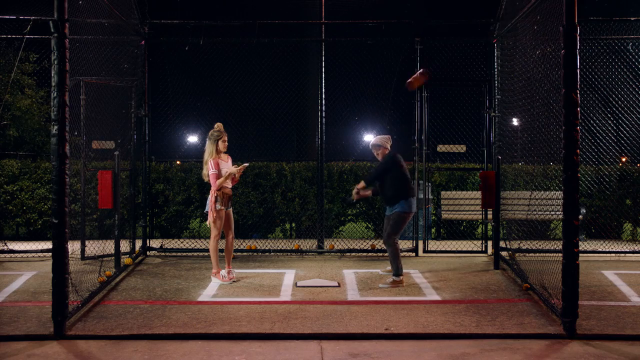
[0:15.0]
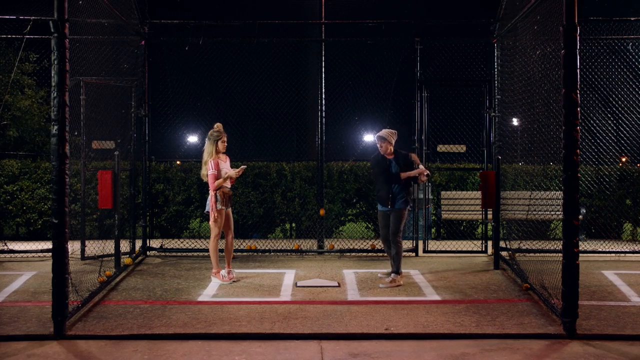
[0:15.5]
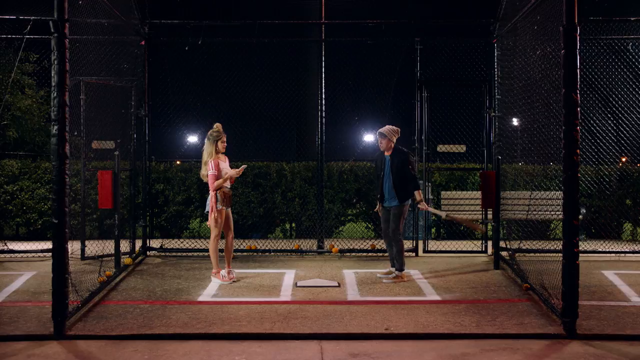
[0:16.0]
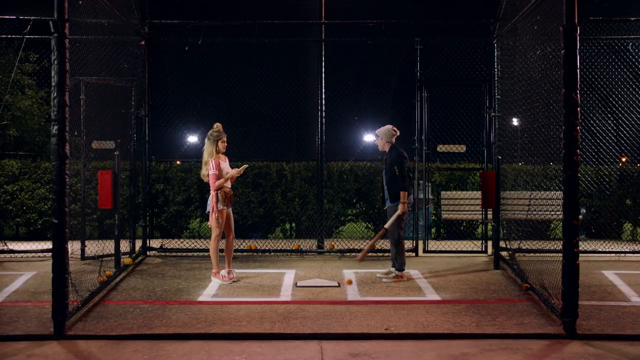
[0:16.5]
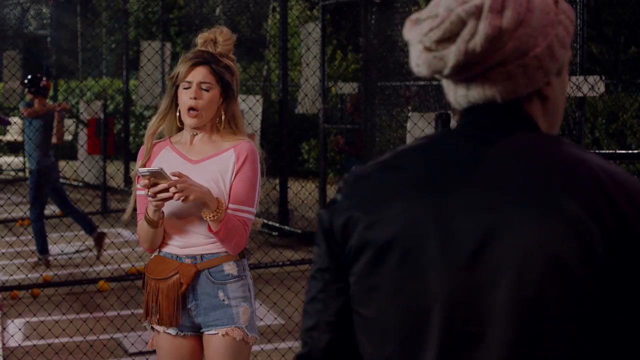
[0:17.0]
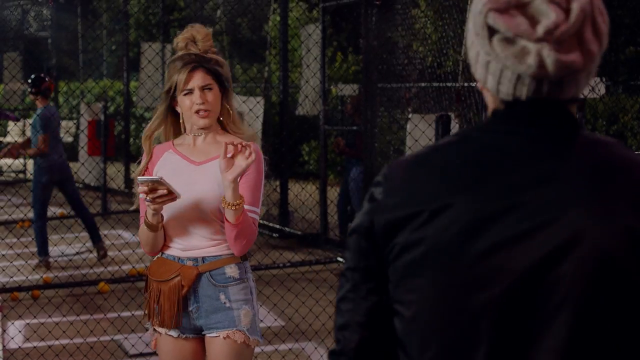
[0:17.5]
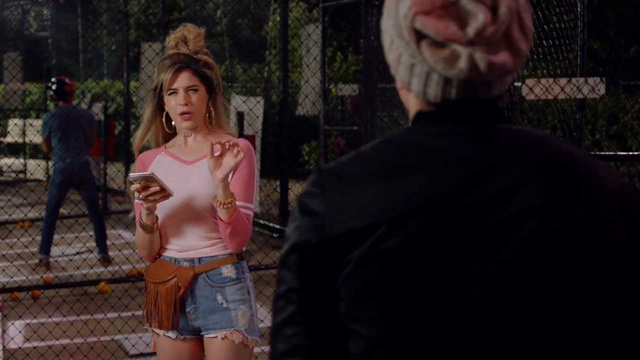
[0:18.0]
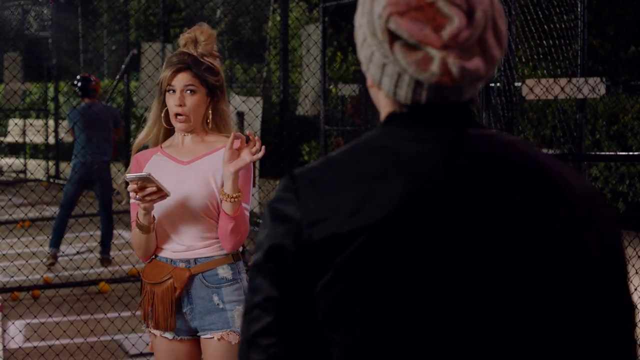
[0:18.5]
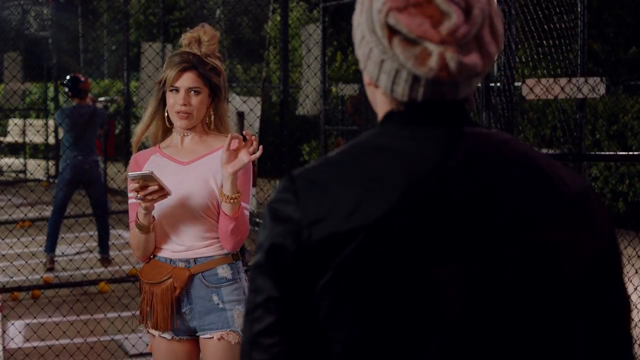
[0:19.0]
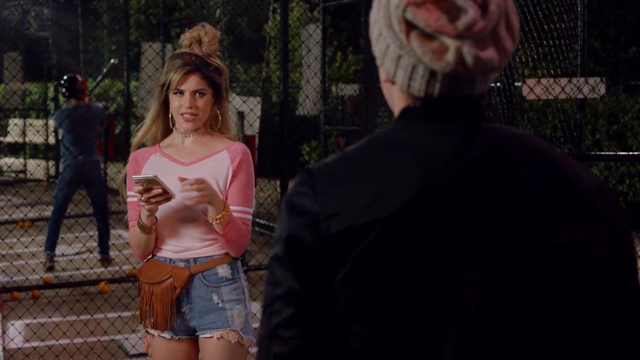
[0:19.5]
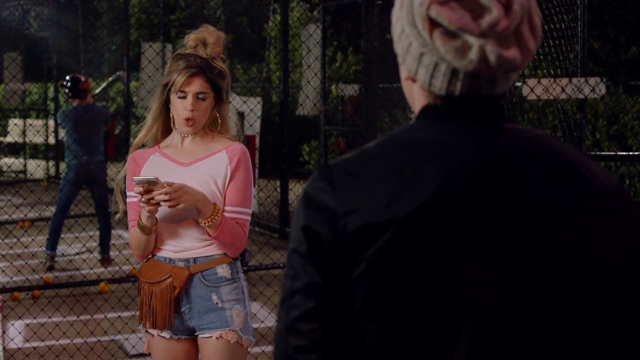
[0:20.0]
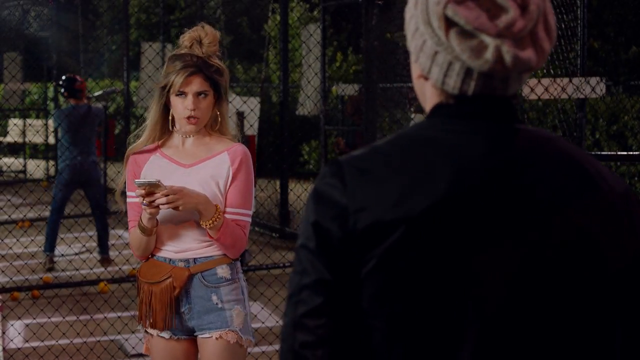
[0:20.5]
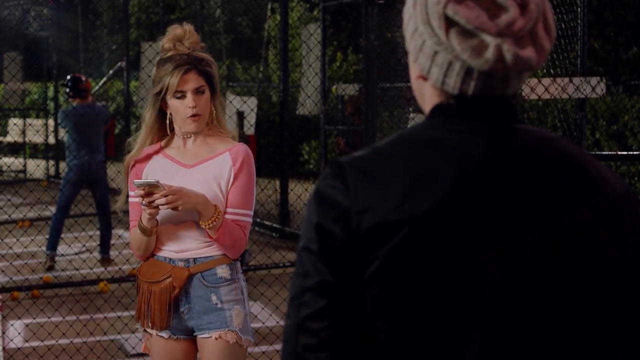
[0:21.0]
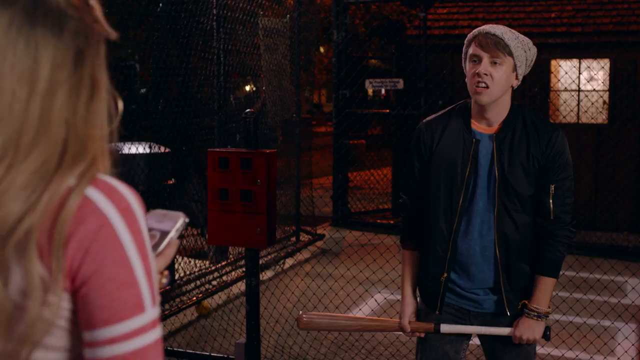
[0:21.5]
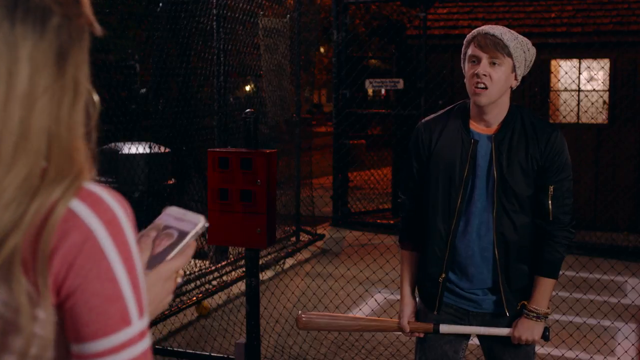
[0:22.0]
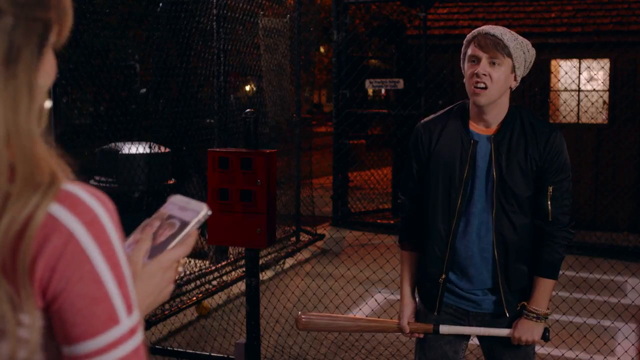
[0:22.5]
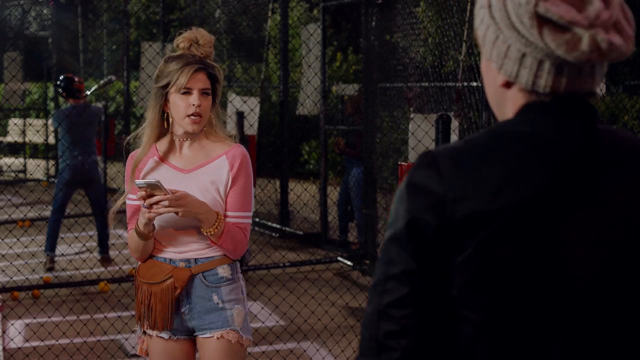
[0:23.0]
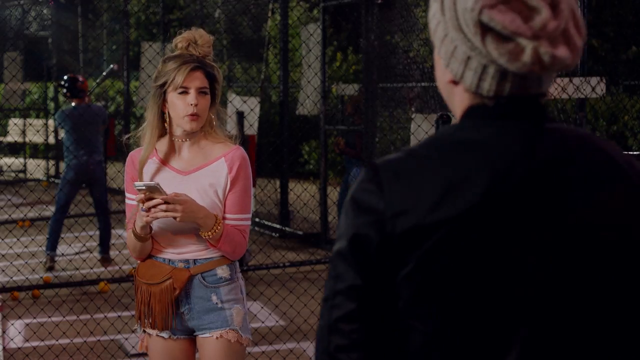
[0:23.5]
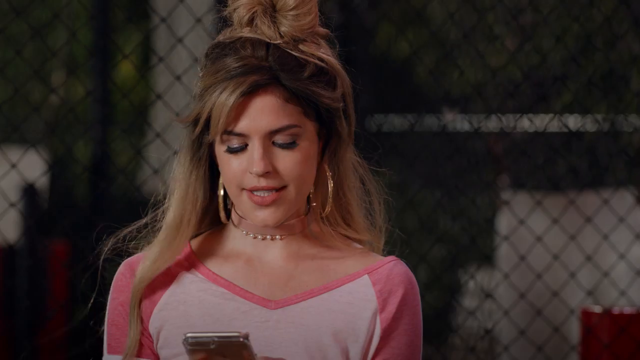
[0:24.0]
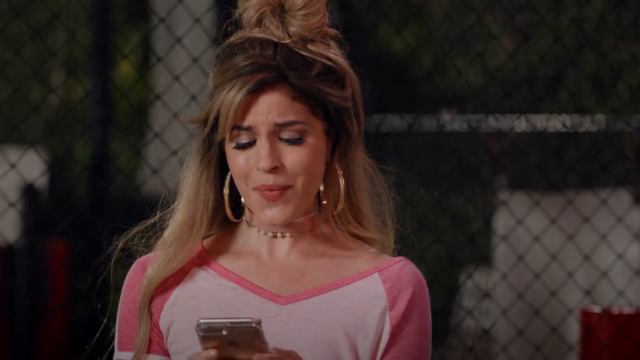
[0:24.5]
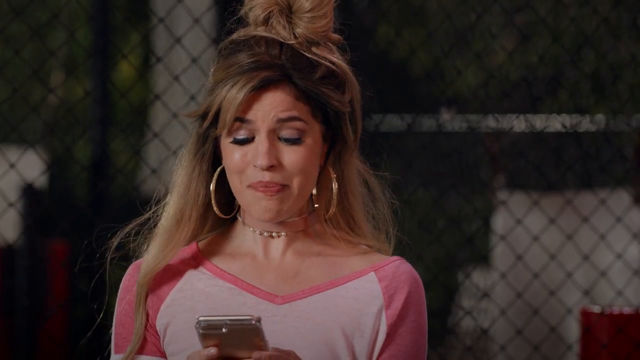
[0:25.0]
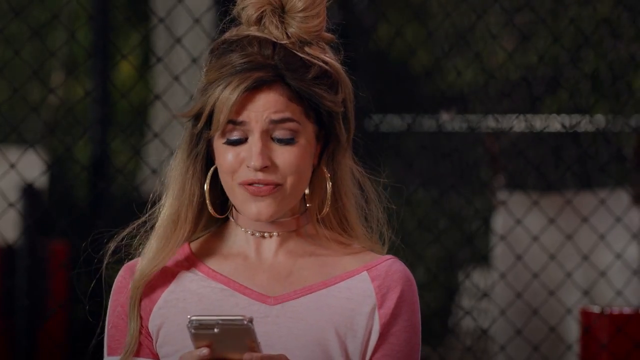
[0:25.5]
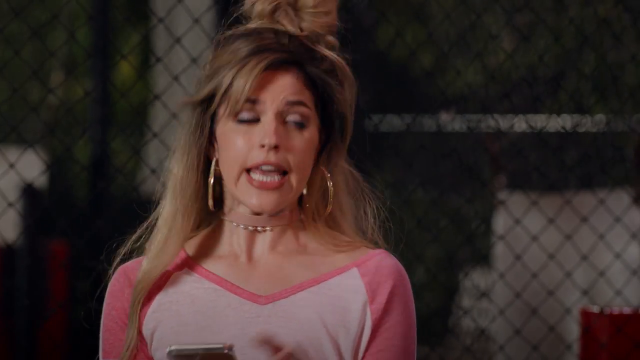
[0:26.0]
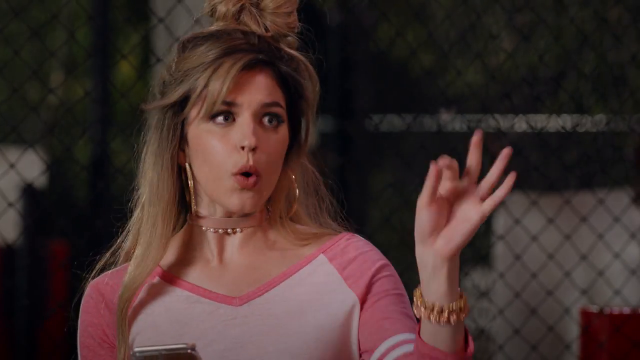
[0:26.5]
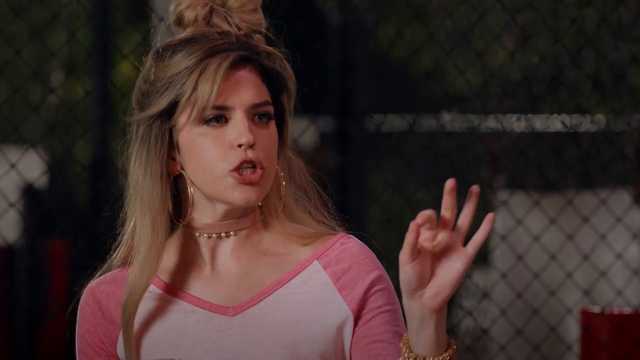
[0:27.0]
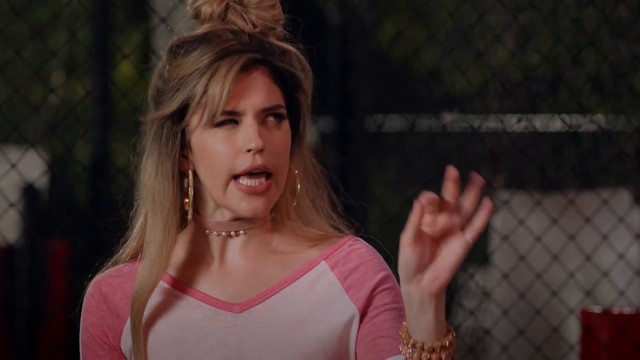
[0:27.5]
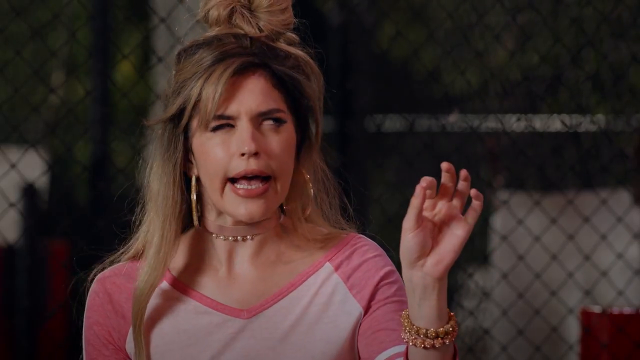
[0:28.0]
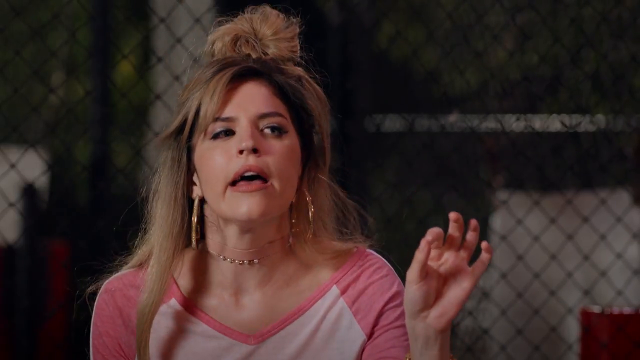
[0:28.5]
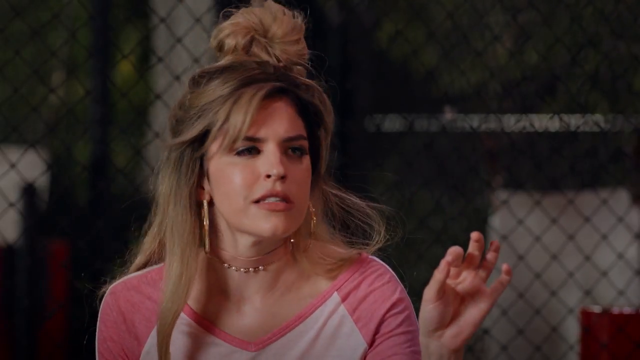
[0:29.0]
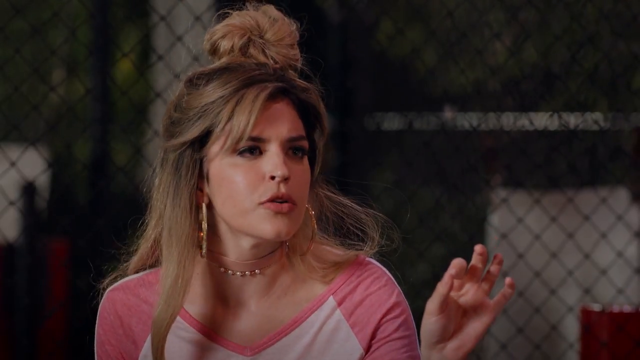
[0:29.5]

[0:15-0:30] Two people are seen at a sort of wide angle in a batting cage at night. The man in the batting cage wears long pants, a jacket, a blue t-shirt and a winter cap, and holds a bat in his hands. In the other box, to the left of the screen, is the woman, who wears shorts, what look like pink shoes and a pink short-sleeve v-neck sporty top, and has long hair. Behind them are a row of hedges, a park bench and a couple of lit flood lamps lighting the scene. A ball is shot toward home plate, and the man swings and misses, seeming upset. The woman points to her phone and texts, maybe scolding him or kind of telling him off a little; he seems sort of upset that she is doing this. She is a little snide, makes some hand gestures at him, and seems to be kind of a little aggressive.